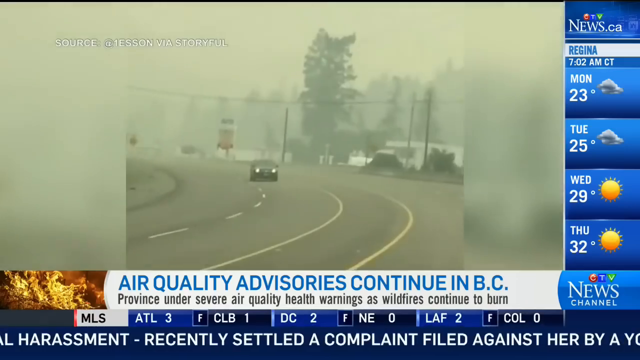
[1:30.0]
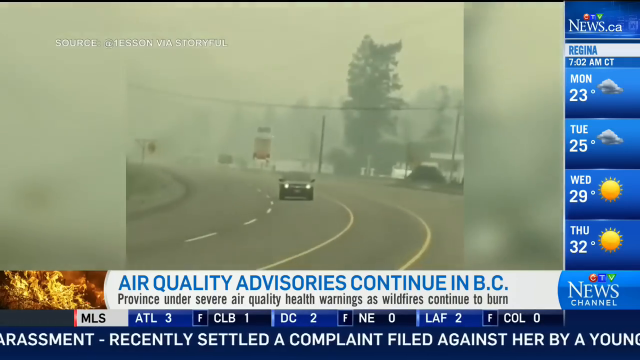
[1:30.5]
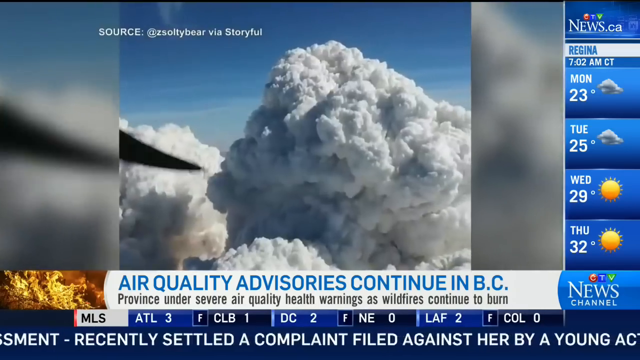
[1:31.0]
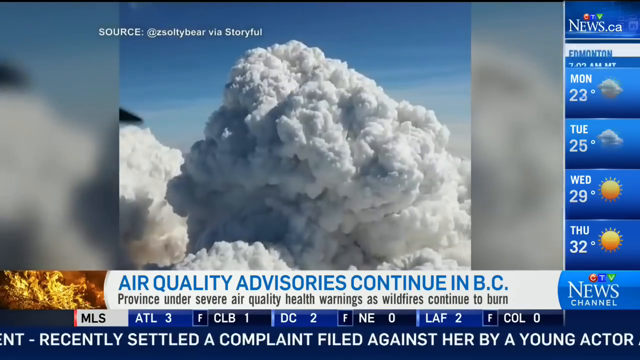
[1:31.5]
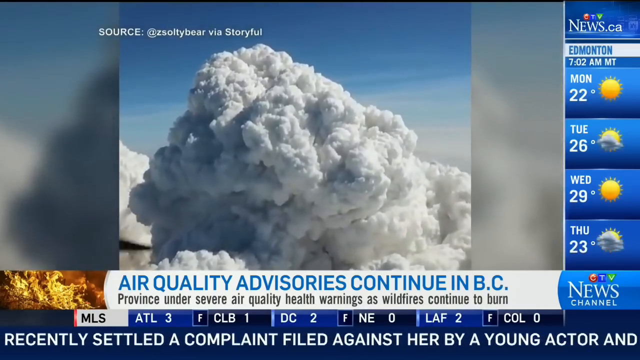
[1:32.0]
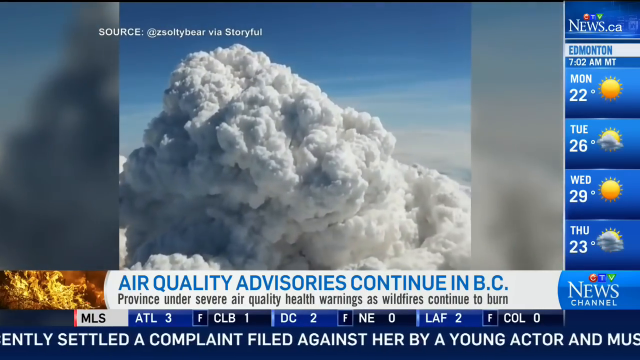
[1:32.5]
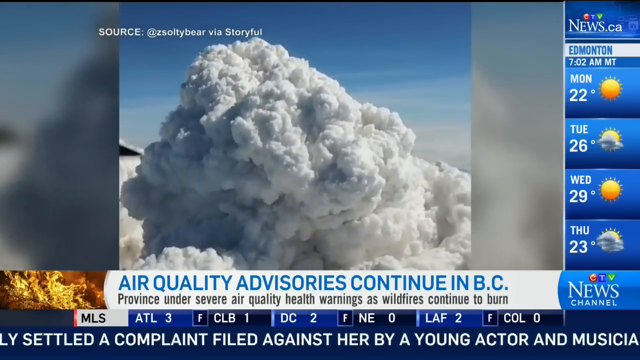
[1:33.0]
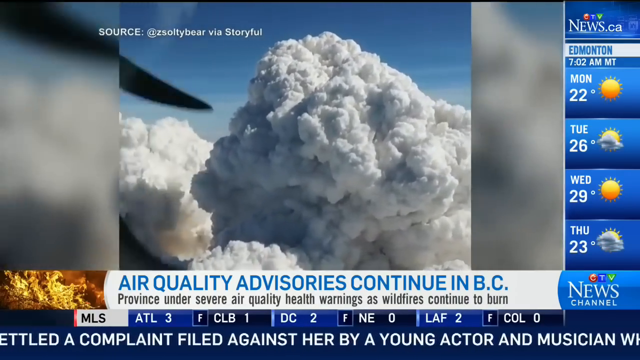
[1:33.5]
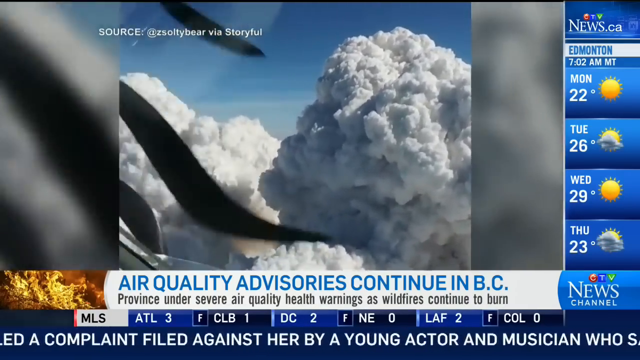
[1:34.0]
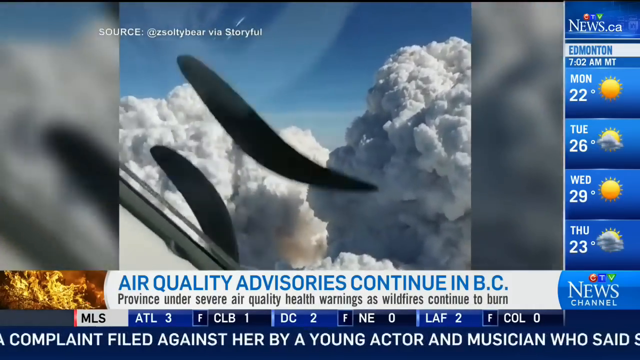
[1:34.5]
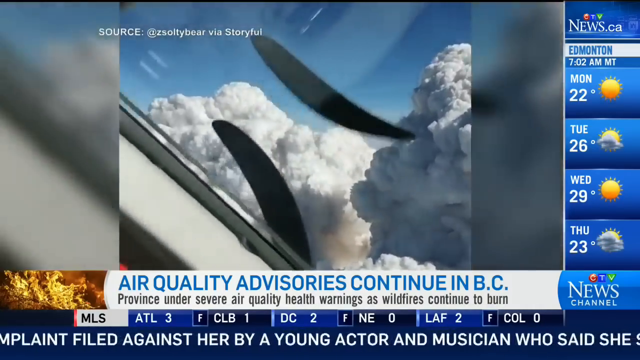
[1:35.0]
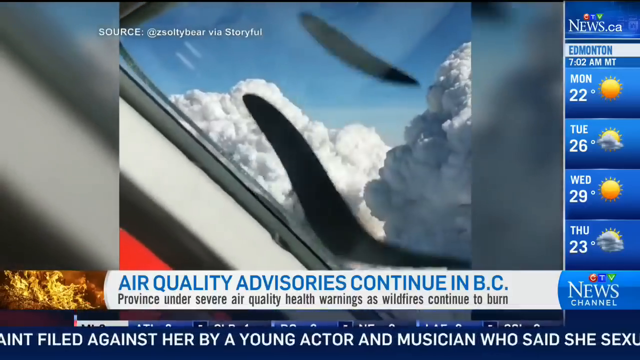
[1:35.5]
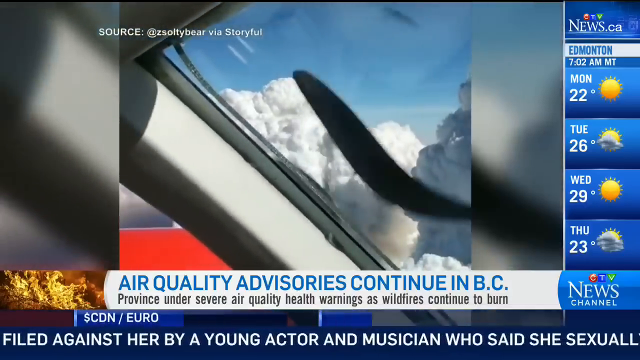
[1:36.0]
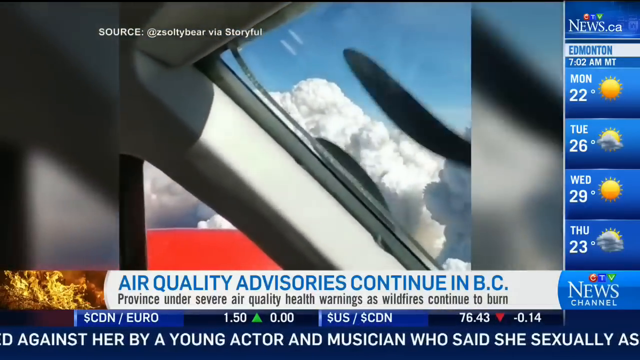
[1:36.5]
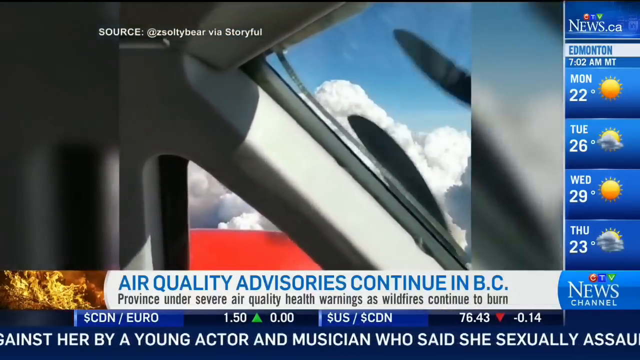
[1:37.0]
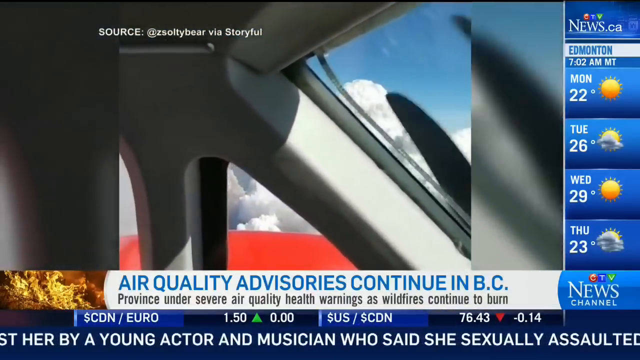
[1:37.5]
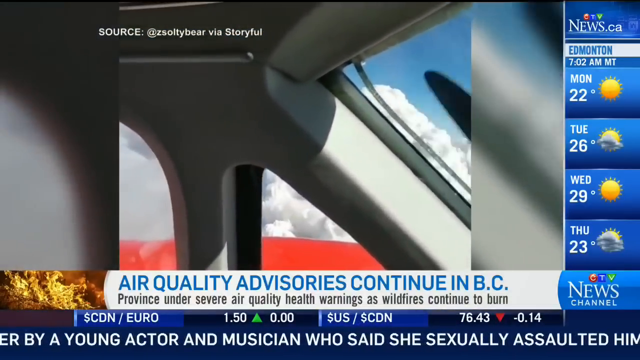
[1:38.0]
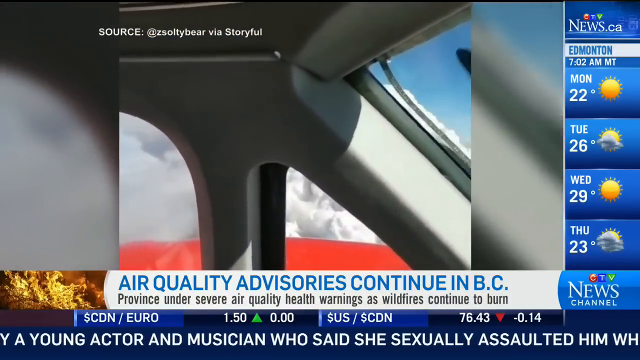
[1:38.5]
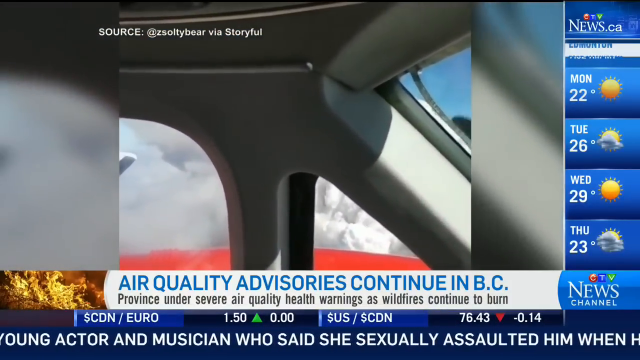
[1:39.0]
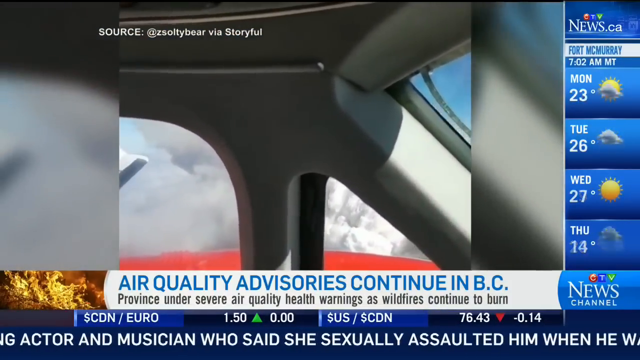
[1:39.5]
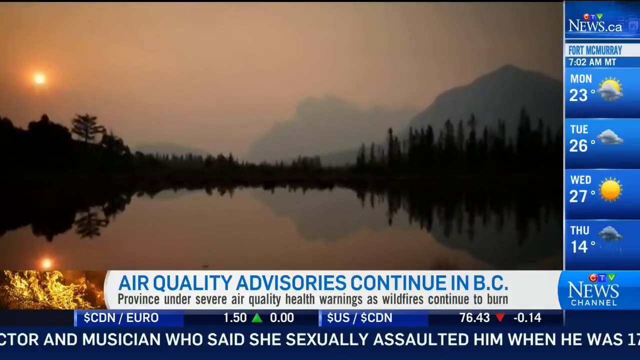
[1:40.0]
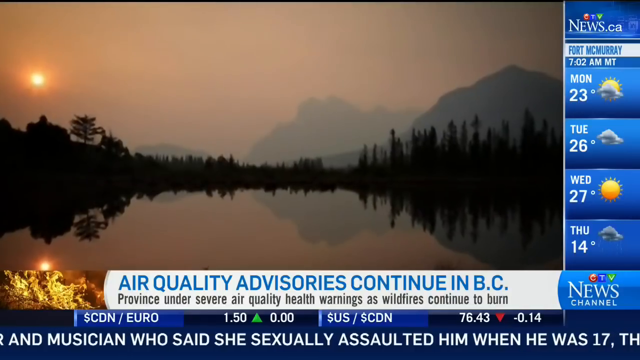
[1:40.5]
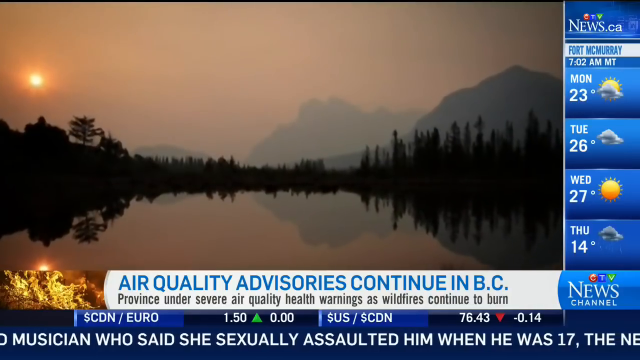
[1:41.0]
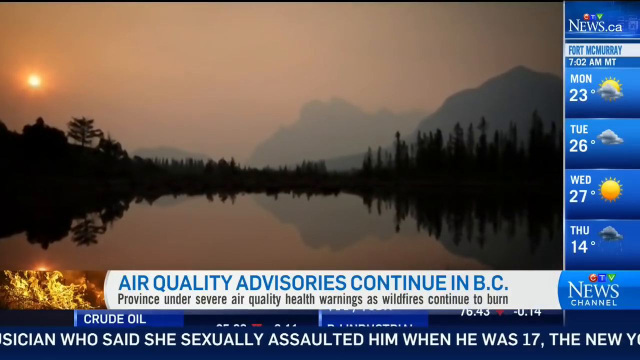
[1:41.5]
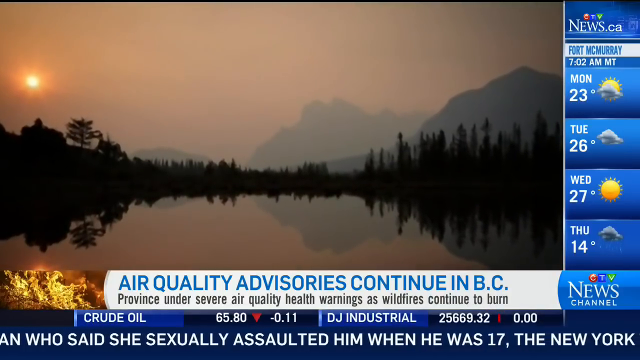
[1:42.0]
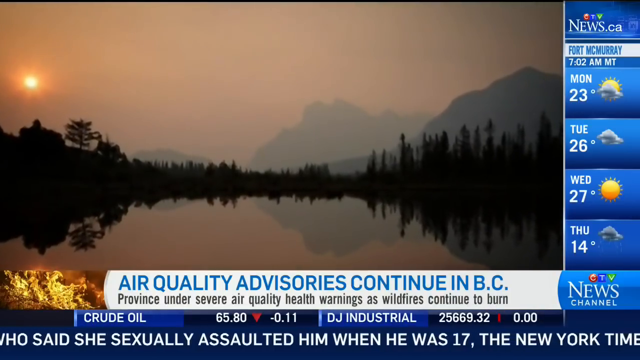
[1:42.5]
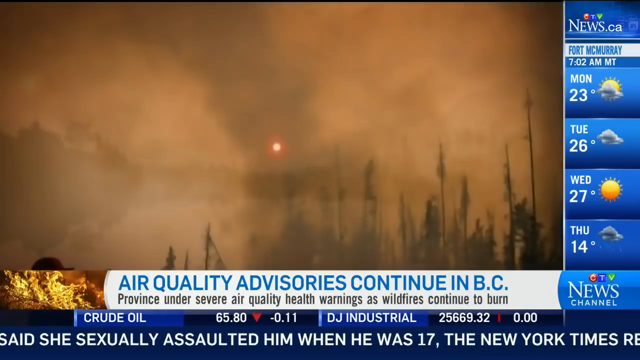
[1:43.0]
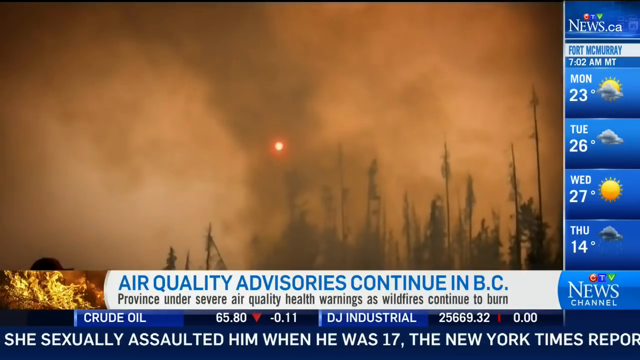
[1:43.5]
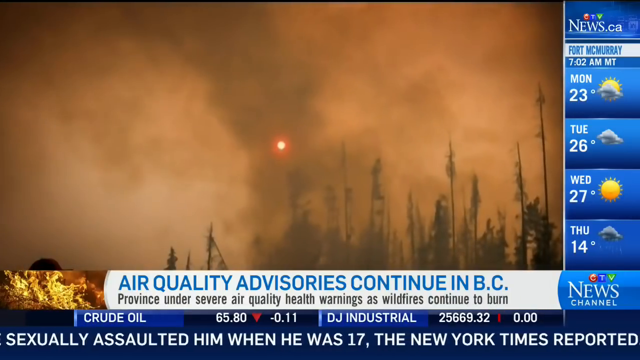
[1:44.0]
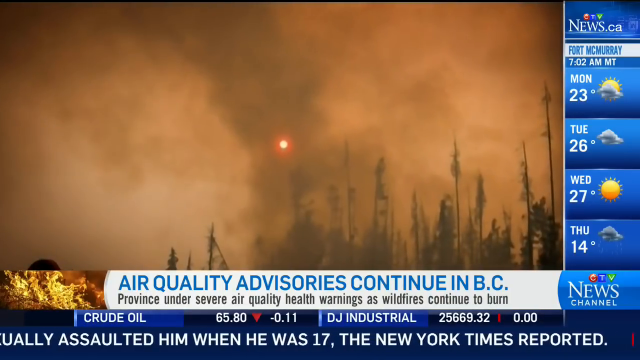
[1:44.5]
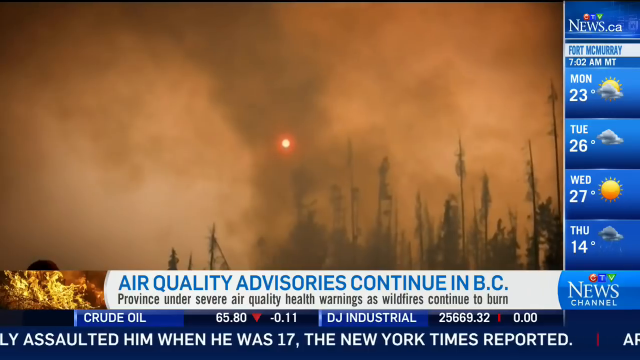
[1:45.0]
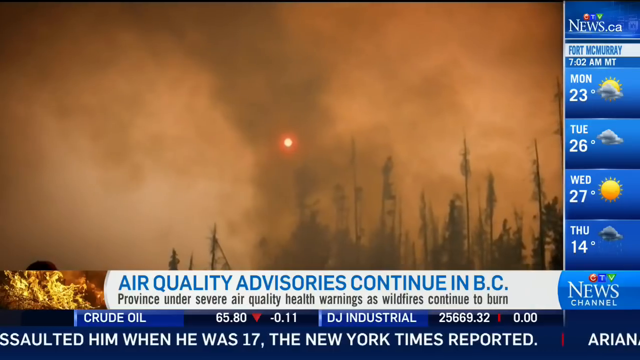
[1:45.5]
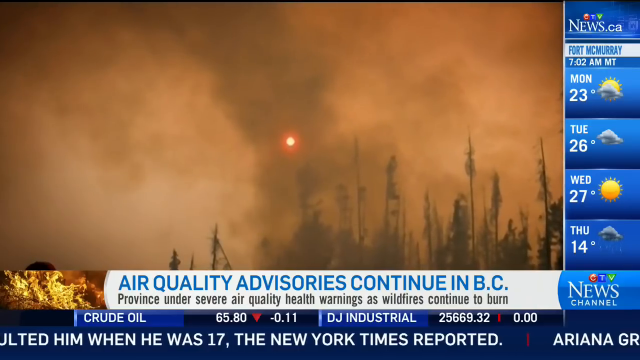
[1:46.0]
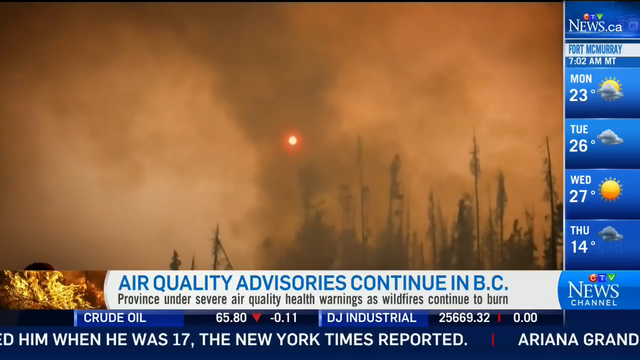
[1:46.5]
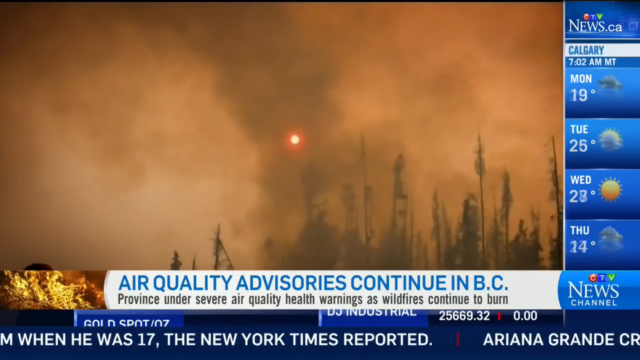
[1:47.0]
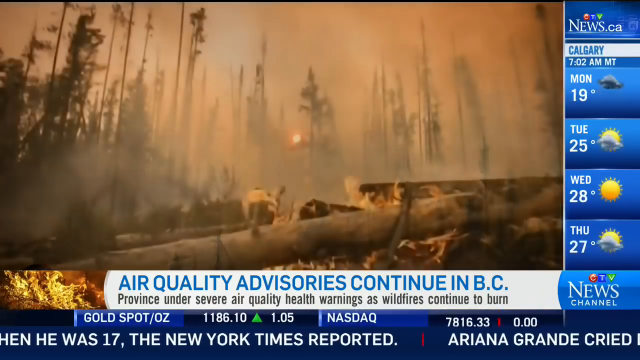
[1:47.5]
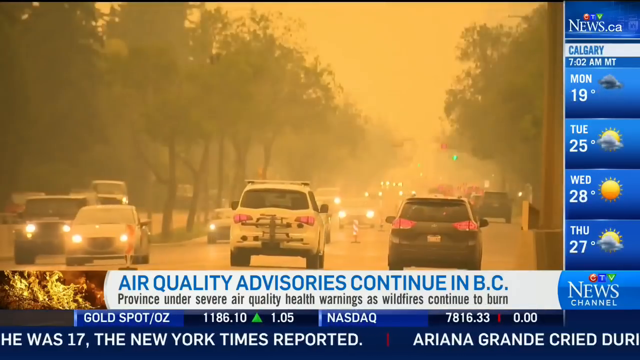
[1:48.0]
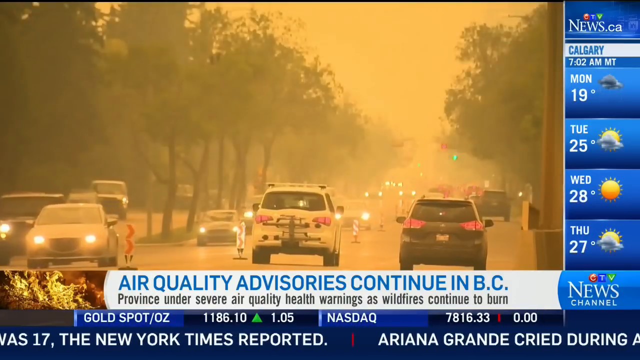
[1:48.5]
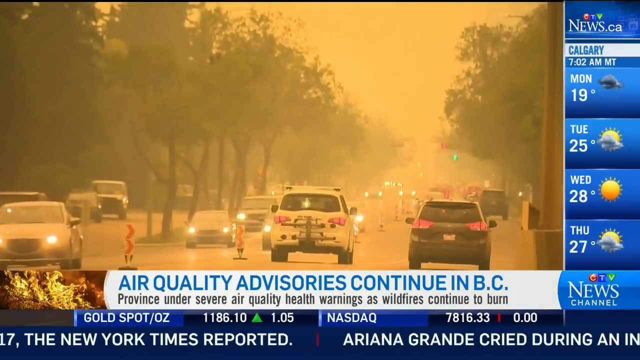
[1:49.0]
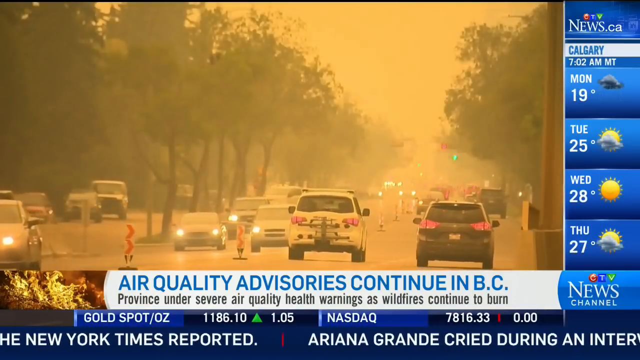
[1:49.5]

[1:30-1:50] The weather shown is for Virginia: Monday 20 degrees and cloudy, Tuesday 25 degrees and cloudy, Wednesday 29 degrees and sunny, Thursday 30 degrees and sunny. The main video is filmed from a vehicle taking a left bend. There are trees at the side of the road, and vehicles pass in the opposite lane with their headlights on, since the road and most of the place are covered in smoke coming from the burning forest. A different video is filmed from a helicopter, with its propeller spinning in the bottom left corner. It shows thick white smoke coming from the forest, viewed from high up, and the sun in the distance covered by the thick smoke.